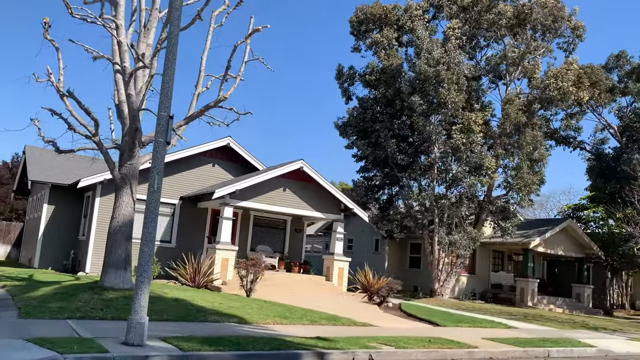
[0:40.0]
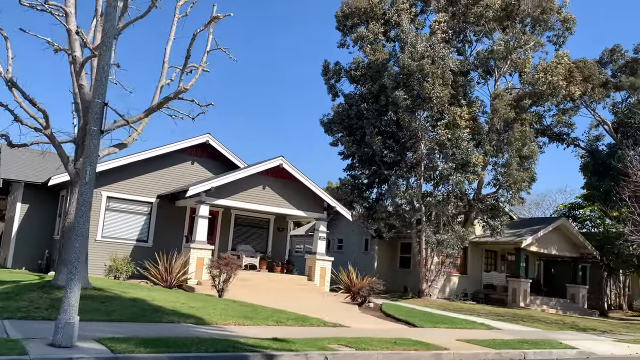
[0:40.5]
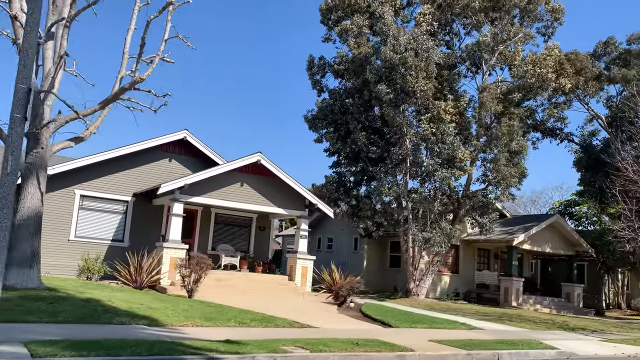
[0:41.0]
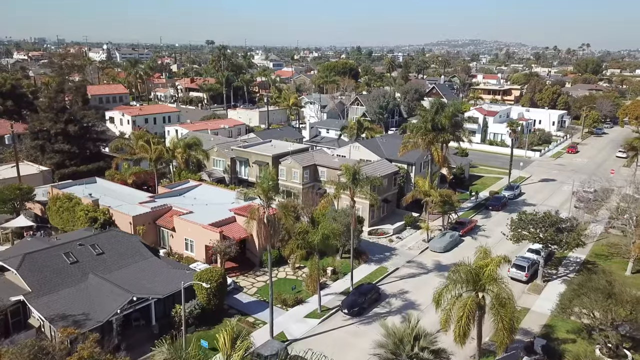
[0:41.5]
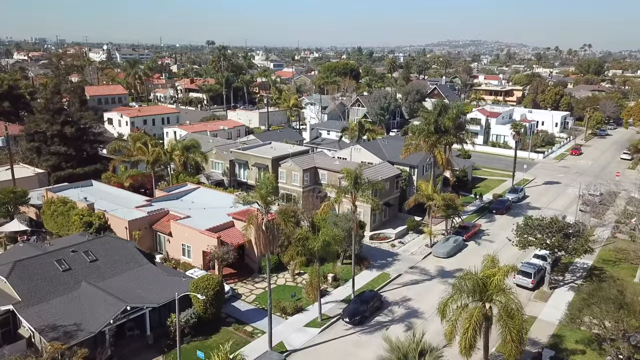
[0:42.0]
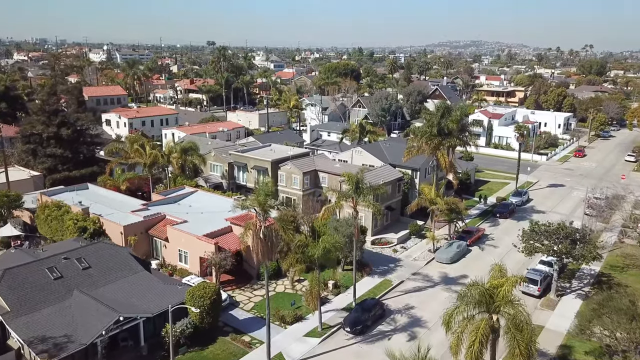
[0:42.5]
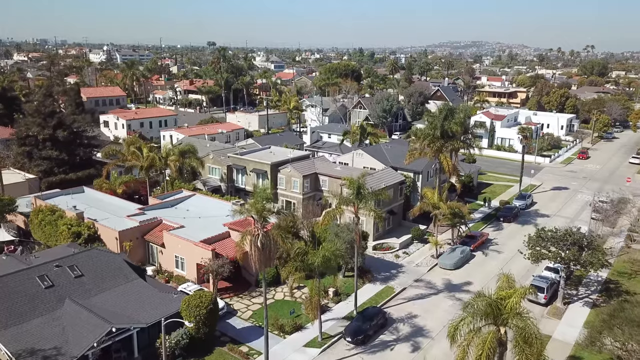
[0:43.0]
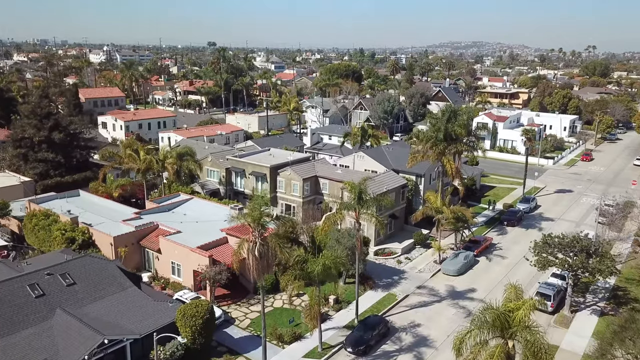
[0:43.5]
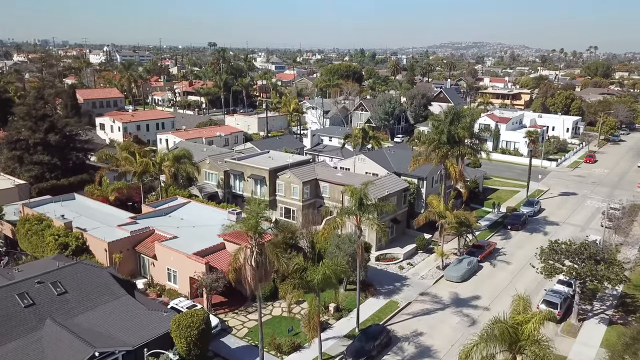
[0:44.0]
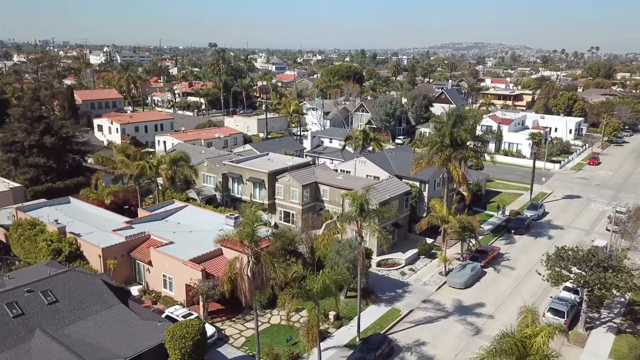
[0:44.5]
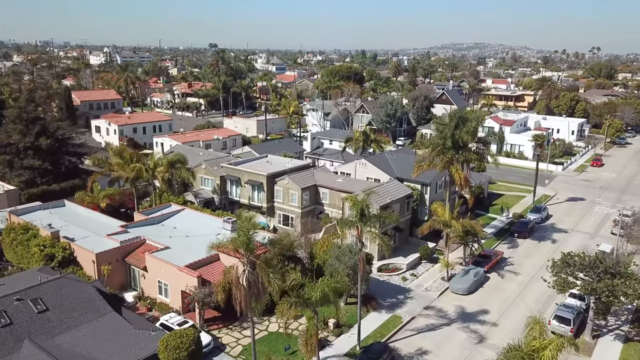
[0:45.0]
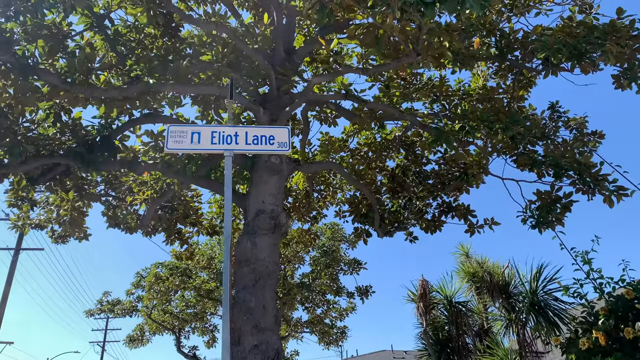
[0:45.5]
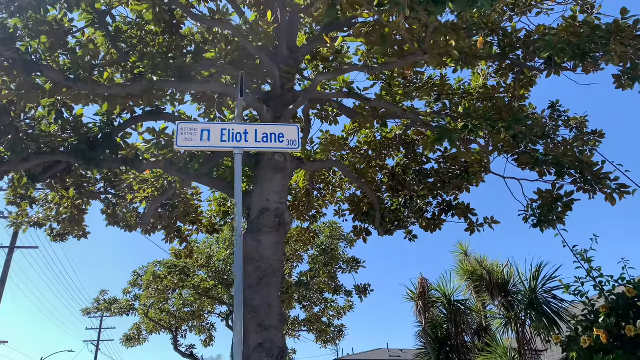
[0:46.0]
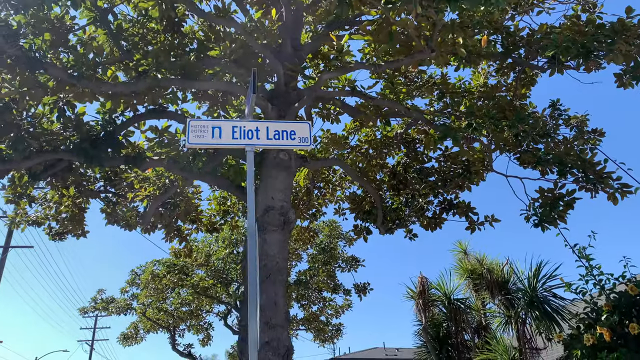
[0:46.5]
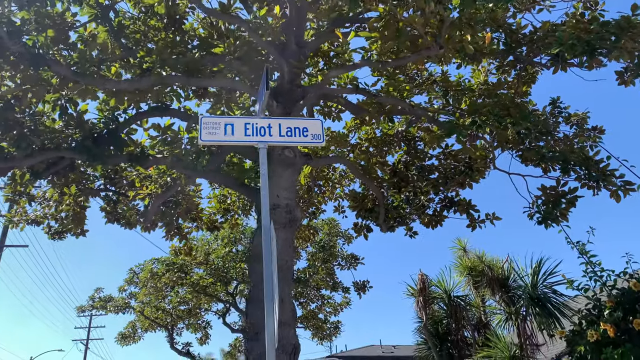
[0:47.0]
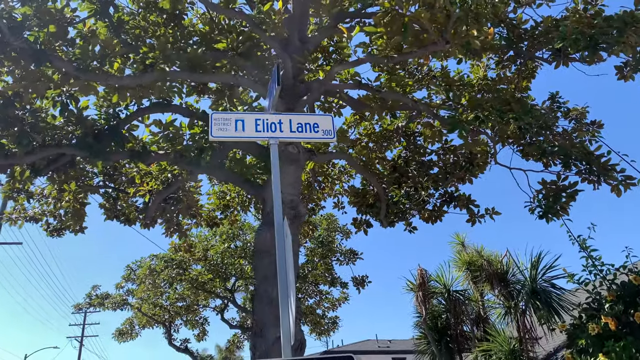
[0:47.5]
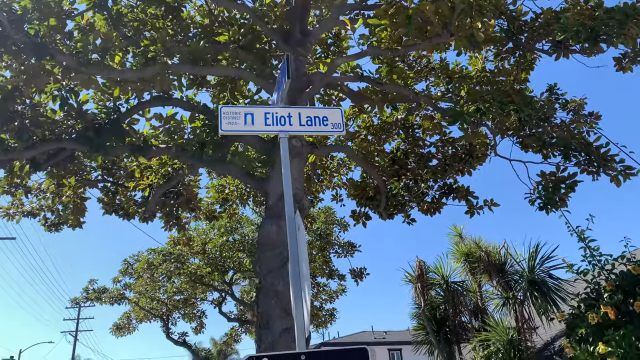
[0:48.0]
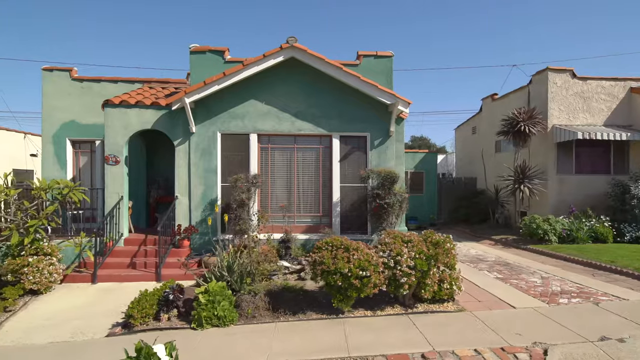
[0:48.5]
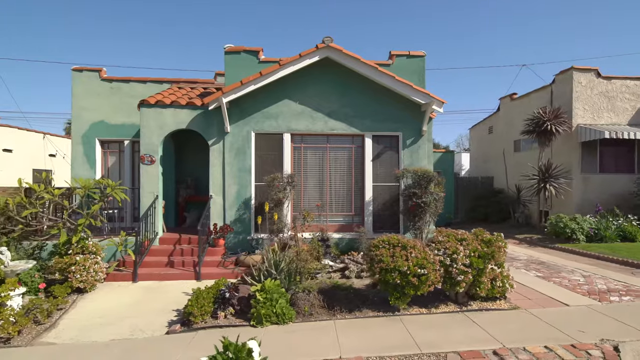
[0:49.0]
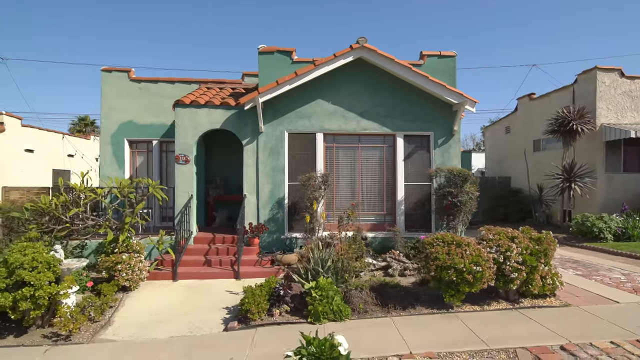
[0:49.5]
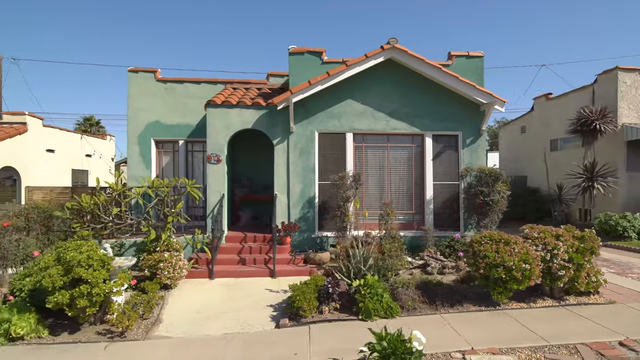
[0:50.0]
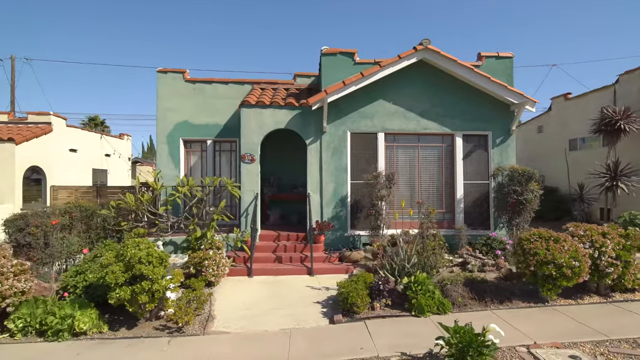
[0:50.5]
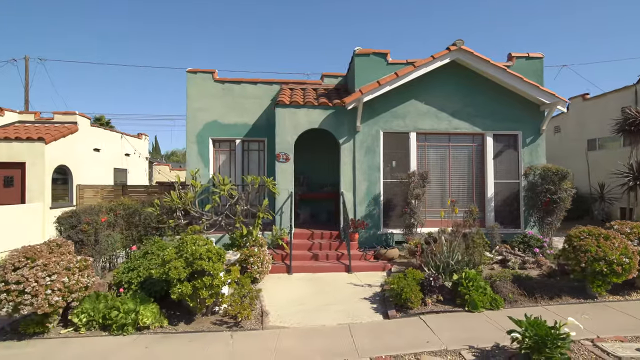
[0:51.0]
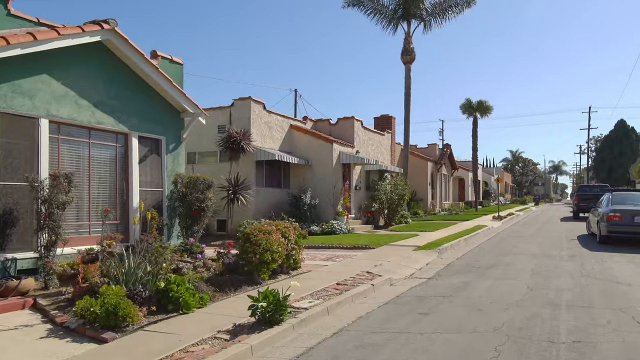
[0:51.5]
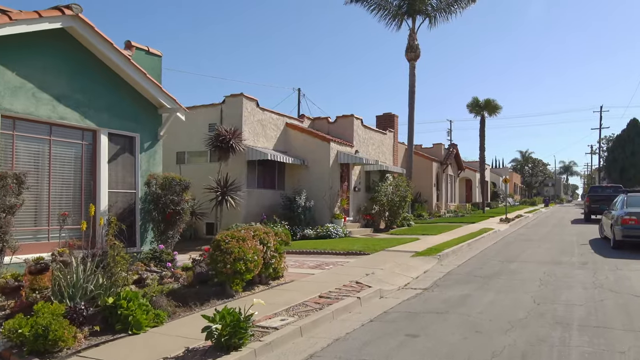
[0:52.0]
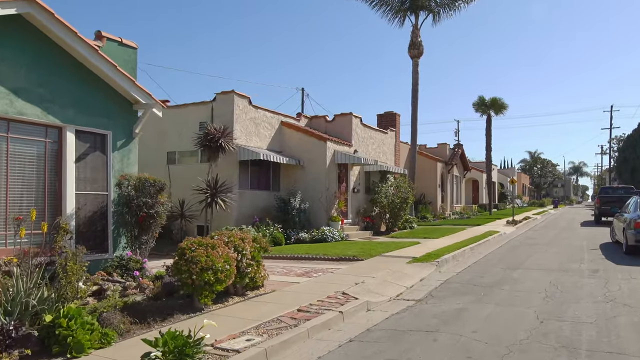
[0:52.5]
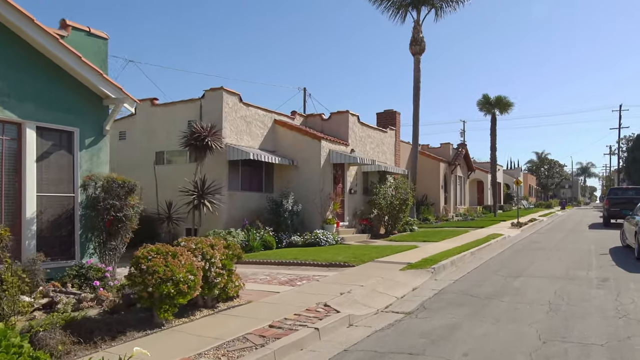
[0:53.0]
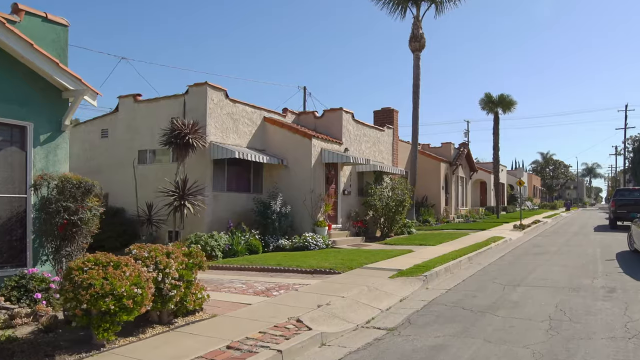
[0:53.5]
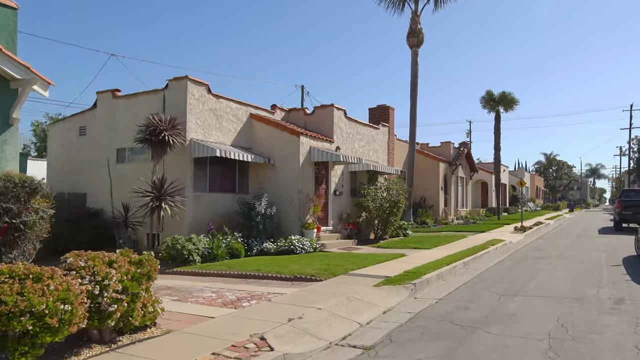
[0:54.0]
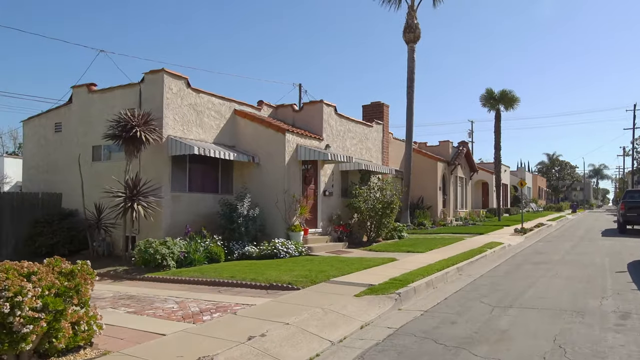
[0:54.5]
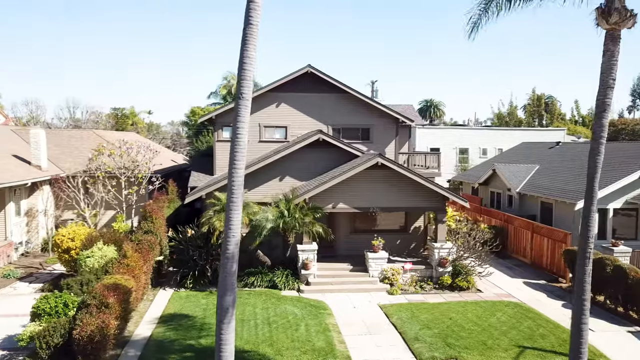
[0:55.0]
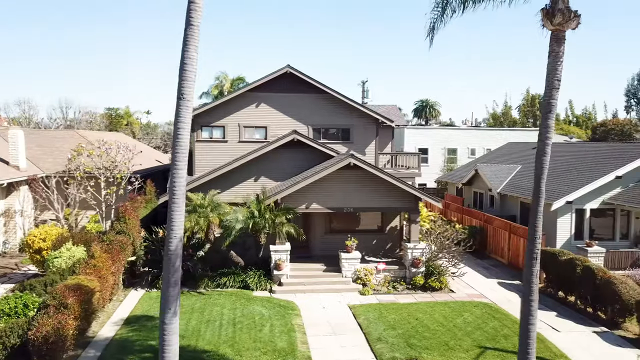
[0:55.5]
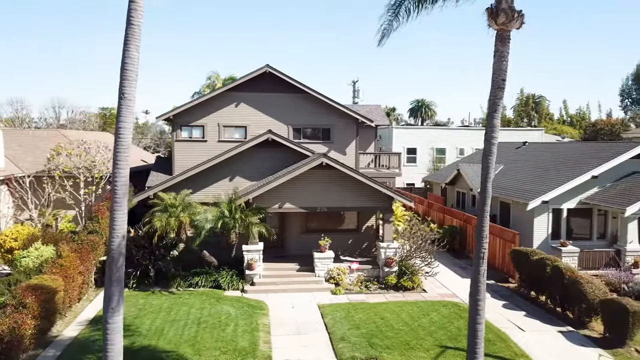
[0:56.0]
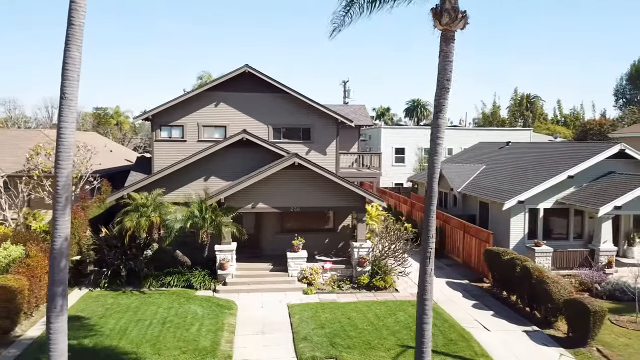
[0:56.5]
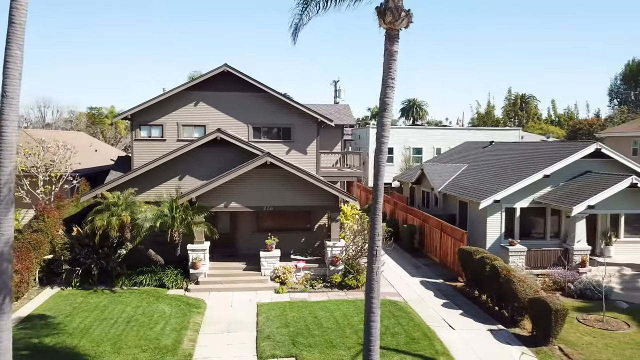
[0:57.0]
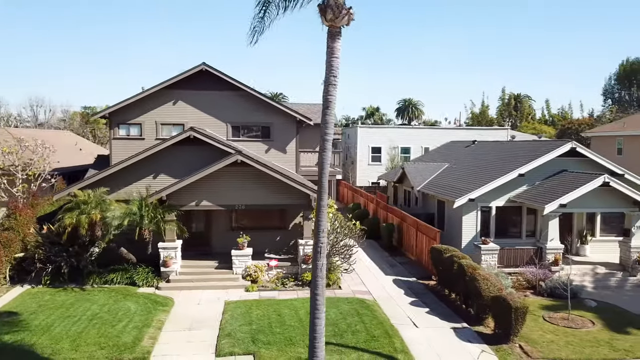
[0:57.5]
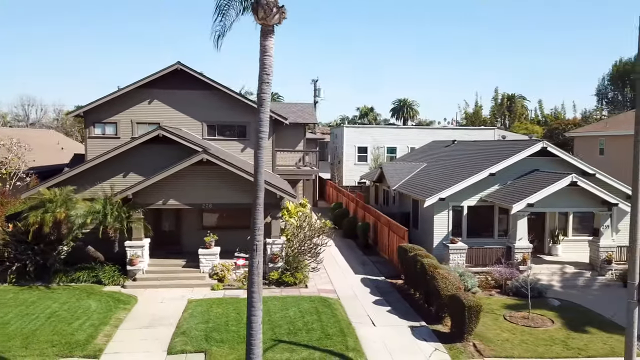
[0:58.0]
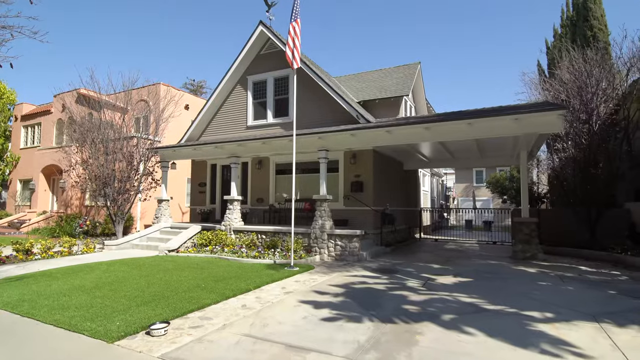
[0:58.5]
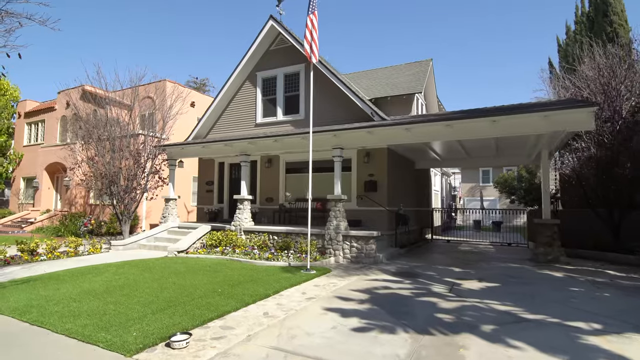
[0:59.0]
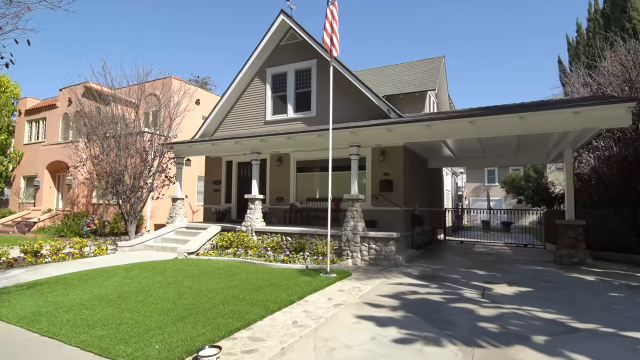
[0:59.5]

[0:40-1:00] The neighborhood continues, with trees; it is very clean and not crowded, and no people are seen around. Cars are parked by the side of the road and a few are moving. The yards are very clean, with well-kept lawns and decorative flowers. Most of the houses are painted cream. An aerial view shows the neighborhood and some streets, a greenhouse passing by, and a tar road. Most of the trees are palm trees, and one has a red and white flag. Most of the houses look clean and well arranged, and most have a well-trimmed lawn with palm and bushy trees on the side. There are decorative flowers in different colors and sizes.